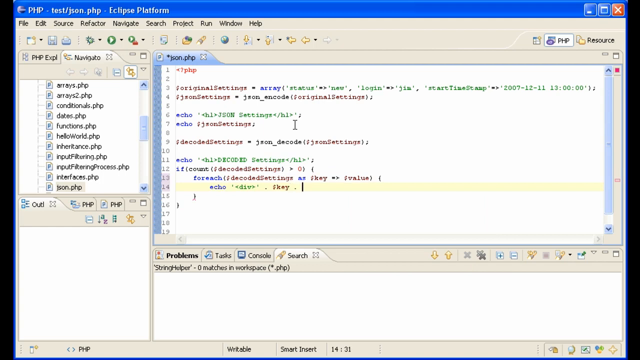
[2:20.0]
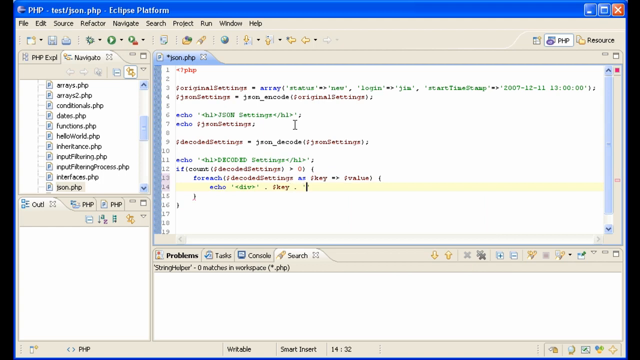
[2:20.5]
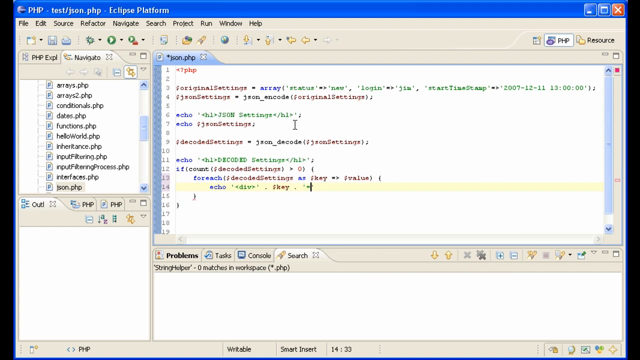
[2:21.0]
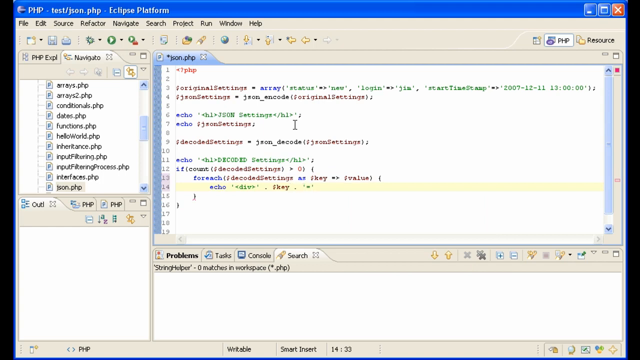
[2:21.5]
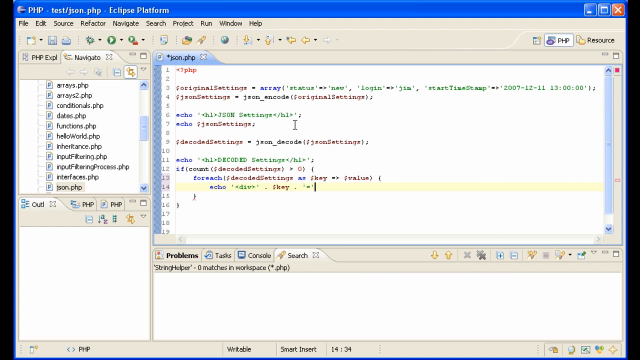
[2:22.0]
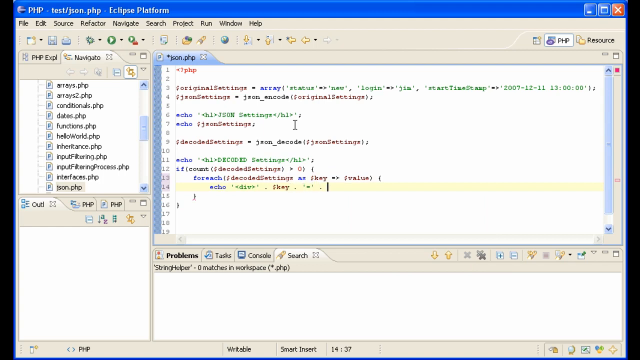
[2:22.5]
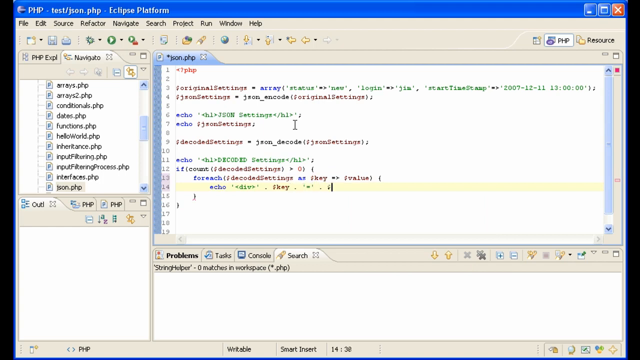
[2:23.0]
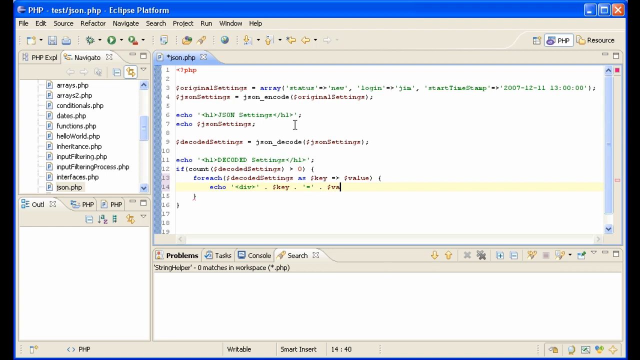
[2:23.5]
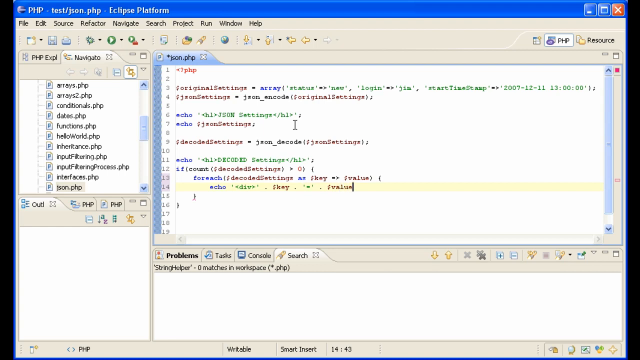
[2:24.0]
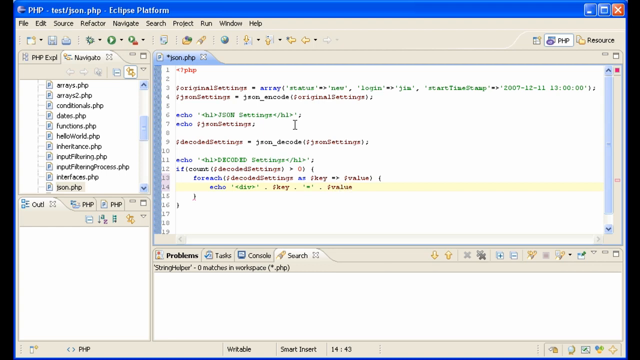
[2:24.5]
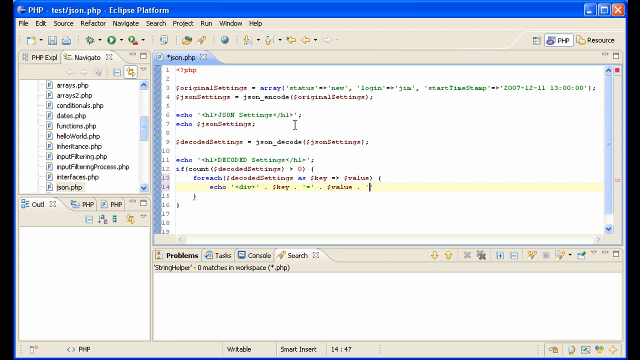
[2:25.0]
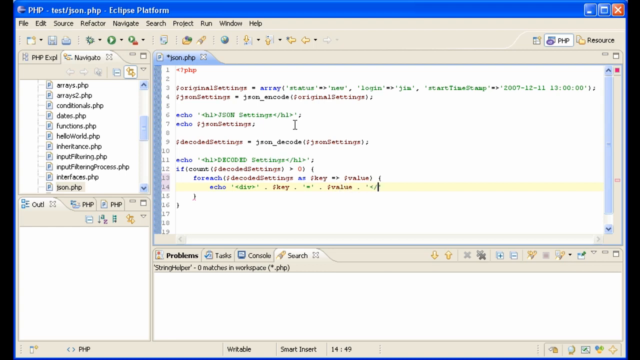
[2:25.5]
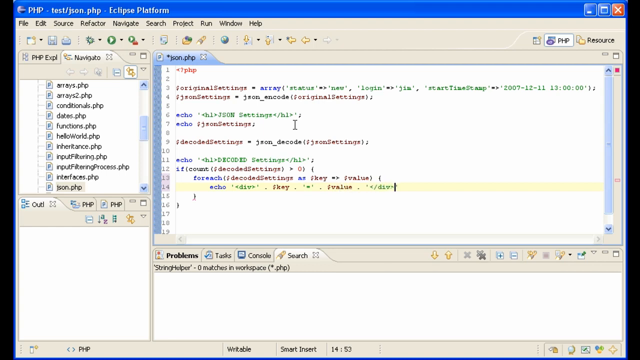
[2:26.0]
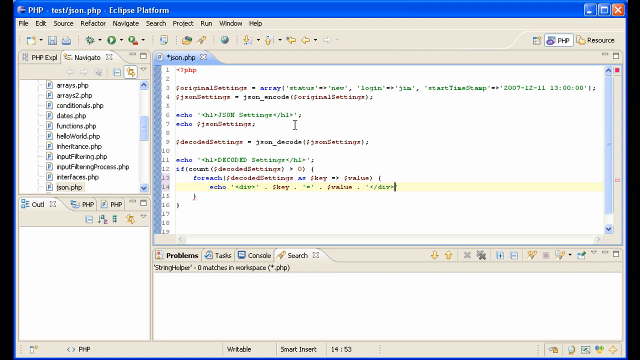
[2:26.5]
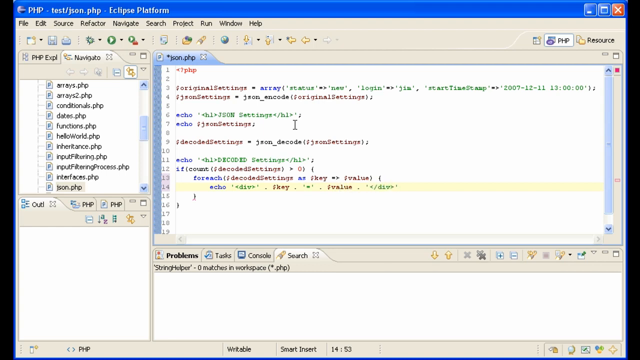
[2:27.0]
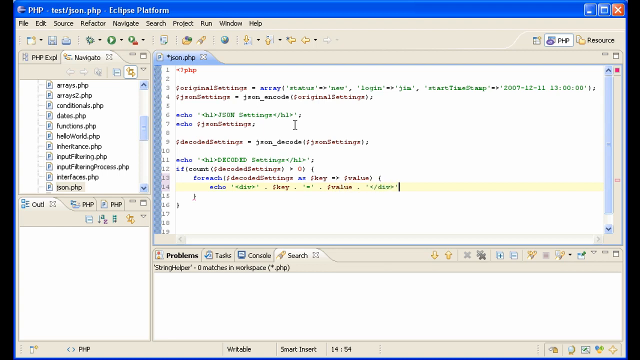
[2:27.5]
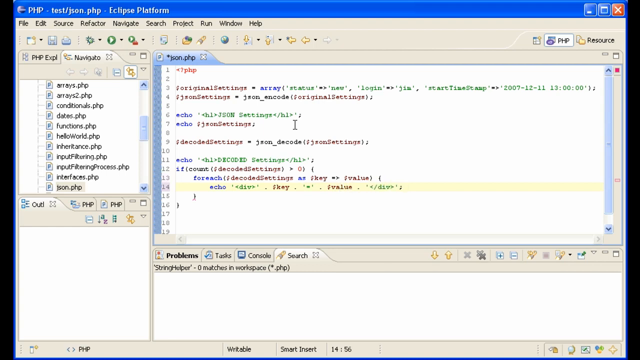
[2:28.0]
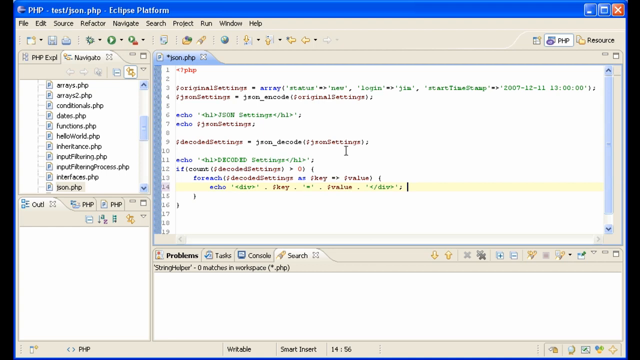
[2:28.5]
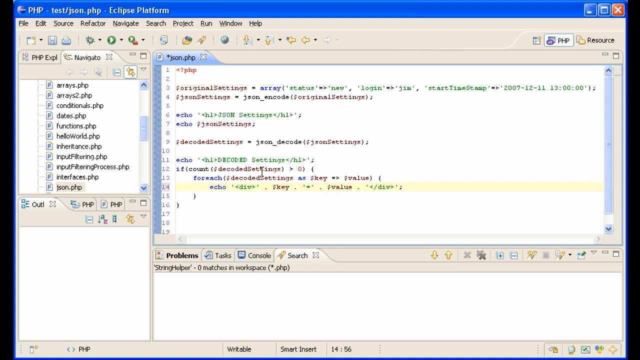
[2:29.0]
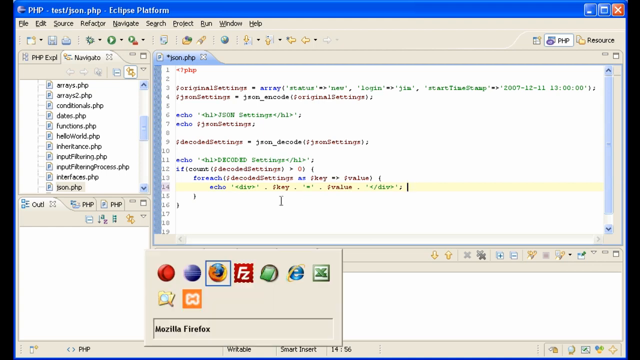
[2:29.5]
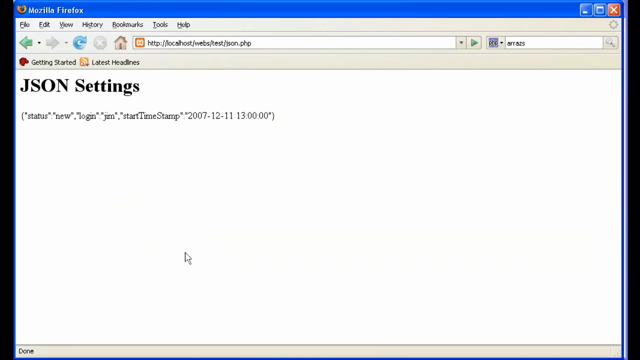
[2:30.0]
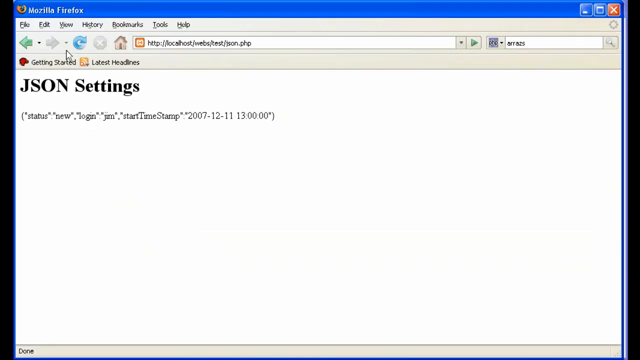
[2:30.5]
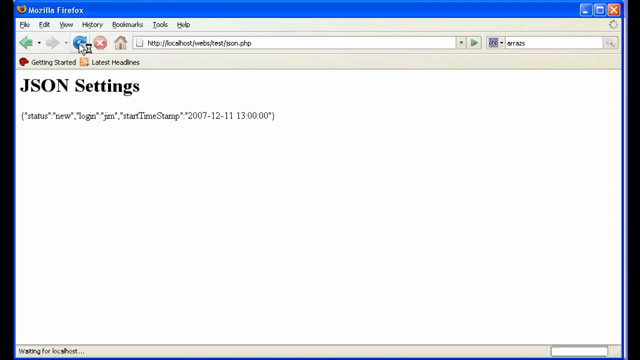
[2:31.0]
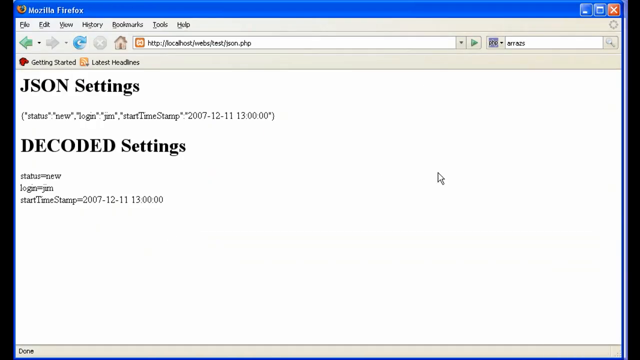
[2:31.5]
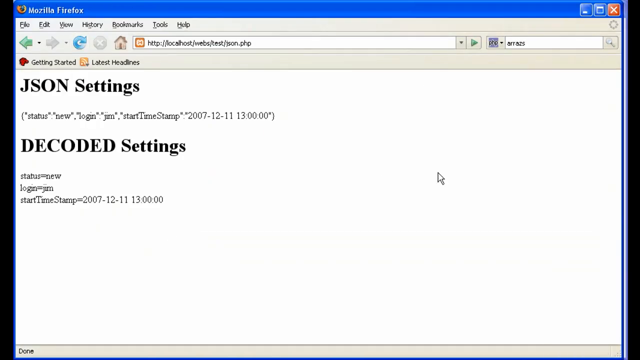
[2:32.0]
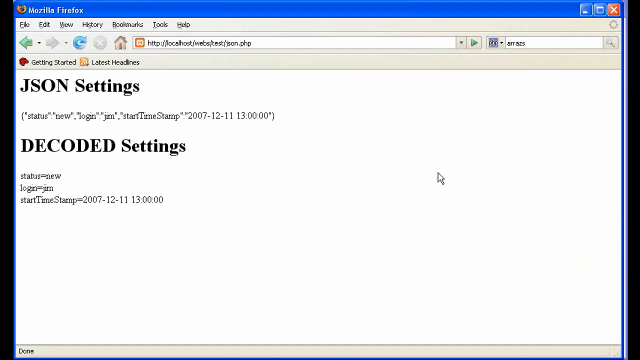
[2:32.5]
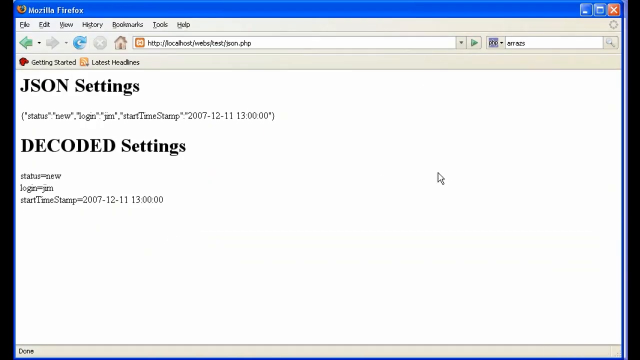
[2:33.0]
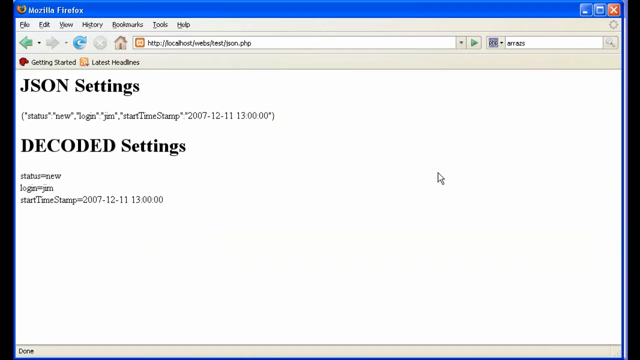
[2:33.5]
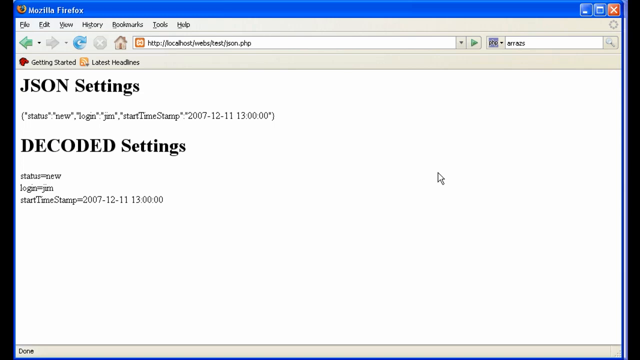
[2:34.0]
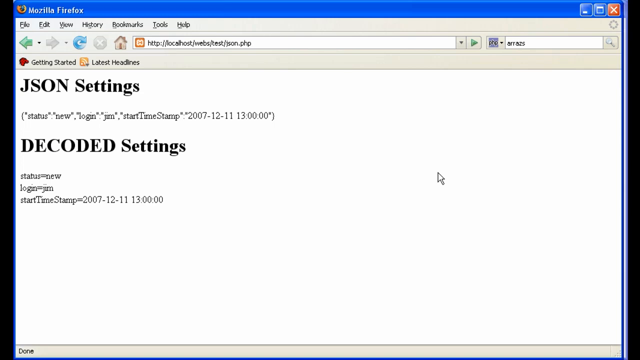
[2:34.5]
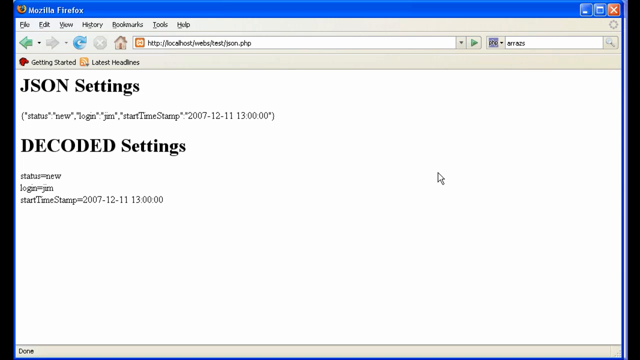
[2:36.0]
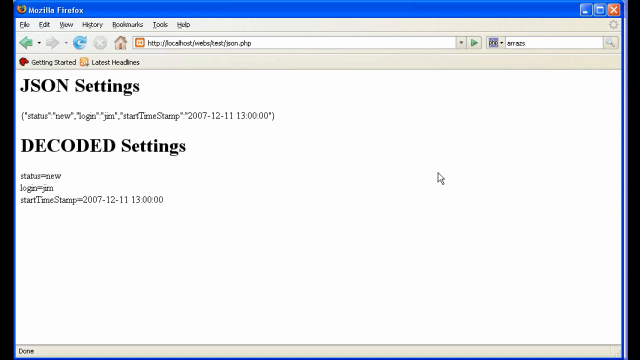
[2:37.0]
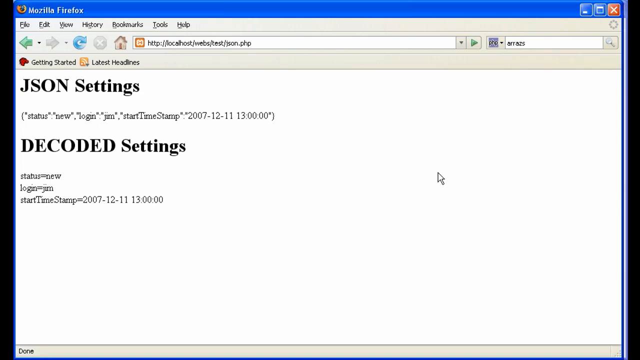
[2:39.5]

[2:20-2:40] More text is typed onto line 14: something that looks like a dash and a period, the word value, what looks like another period, and the word div. A semicolon is added, which seems to conclude the highlighted line 14. The pop-up from earlier with different program icons appears again in the lower part of the screen, and the view switches back to Firefox. The mouse cursor clicks the refresh icon in the browser, and more information is added to the webpage seen earlier: below the JSON settings information, decoded settings information now appears. The mouse cursor then rests on the middle right portion of the browser page.